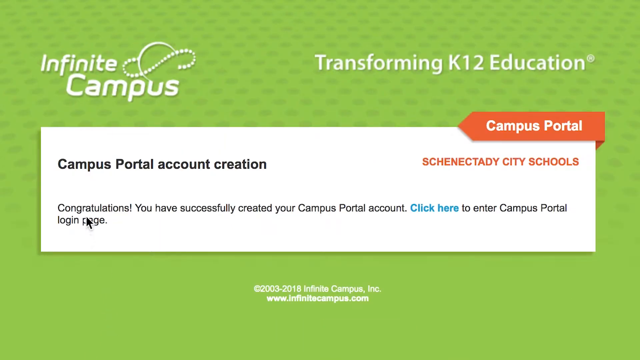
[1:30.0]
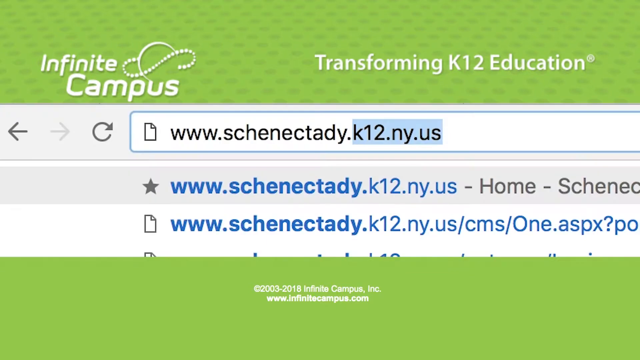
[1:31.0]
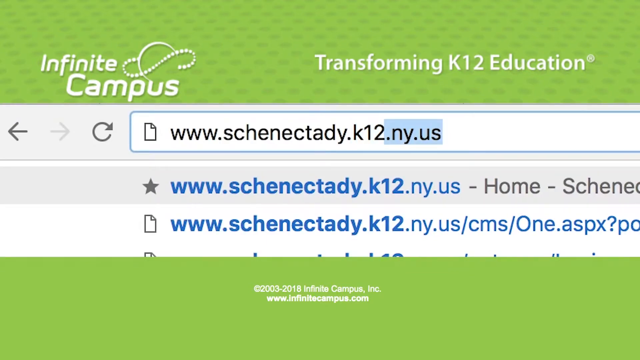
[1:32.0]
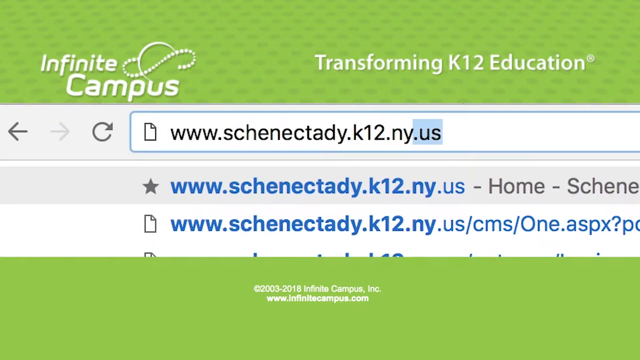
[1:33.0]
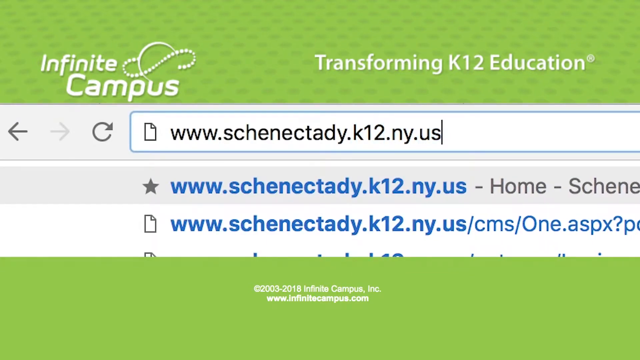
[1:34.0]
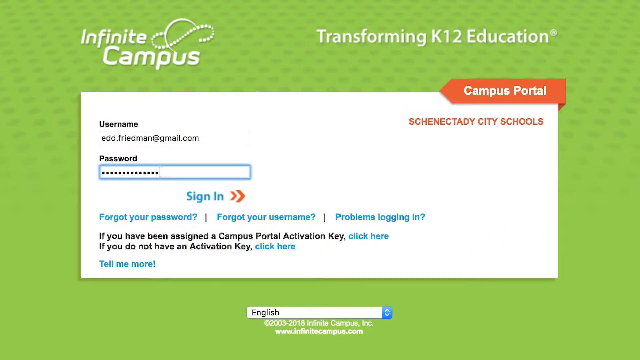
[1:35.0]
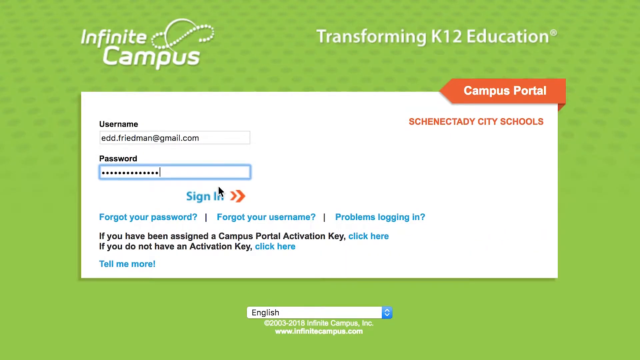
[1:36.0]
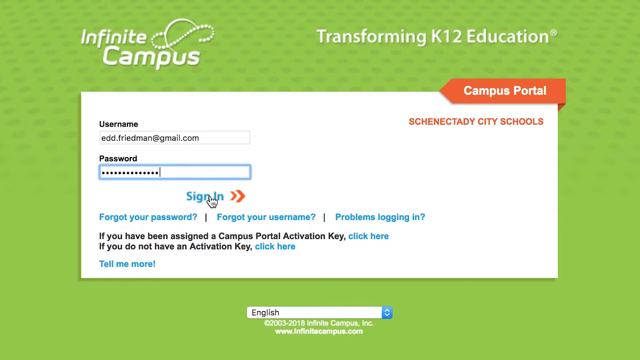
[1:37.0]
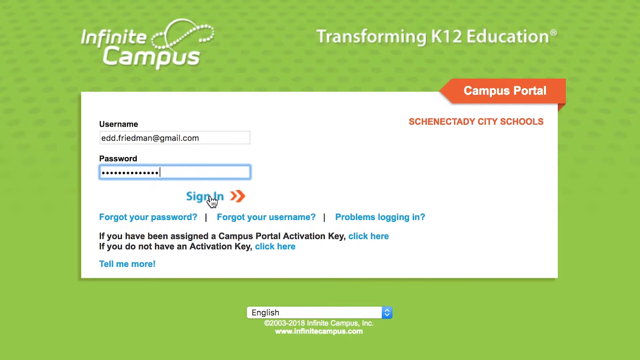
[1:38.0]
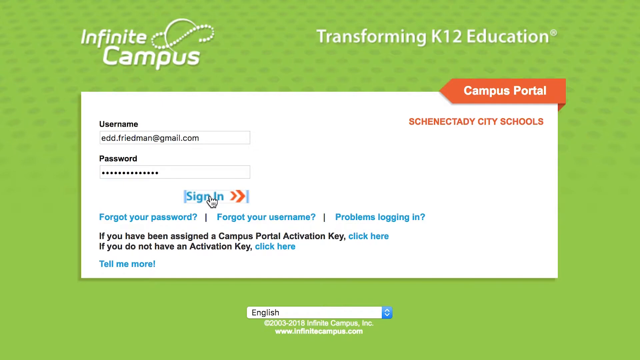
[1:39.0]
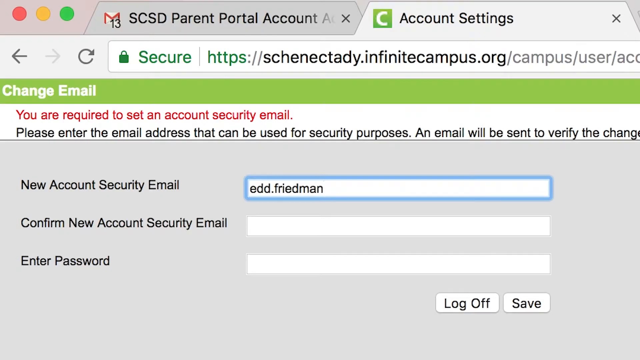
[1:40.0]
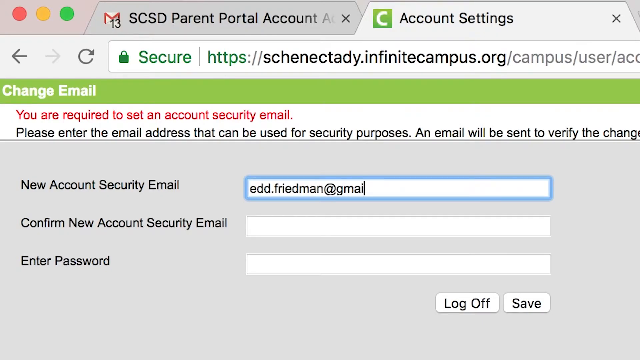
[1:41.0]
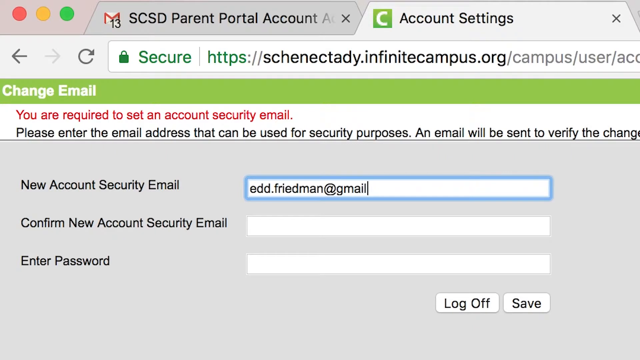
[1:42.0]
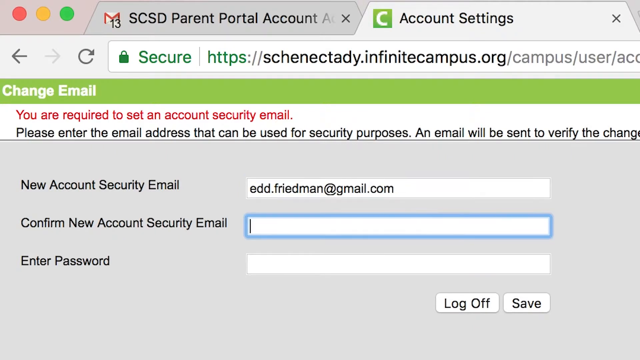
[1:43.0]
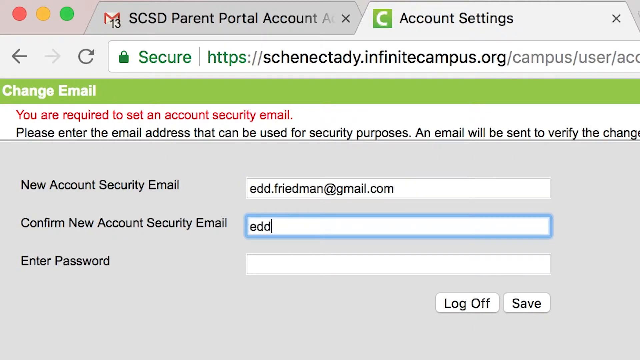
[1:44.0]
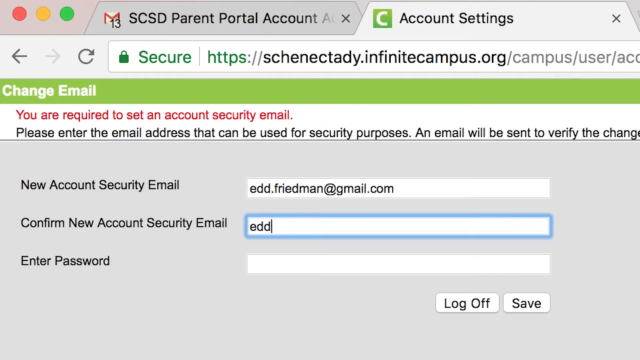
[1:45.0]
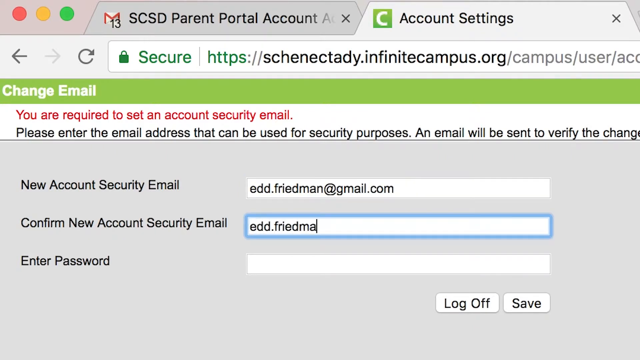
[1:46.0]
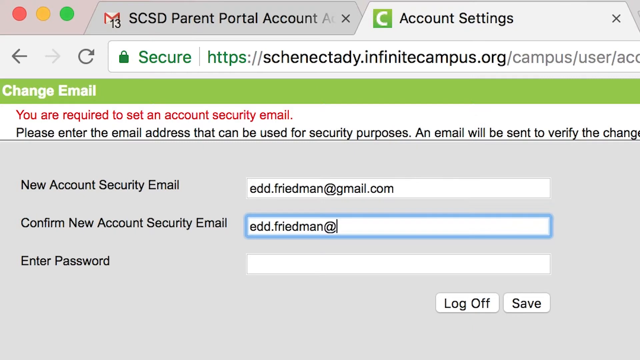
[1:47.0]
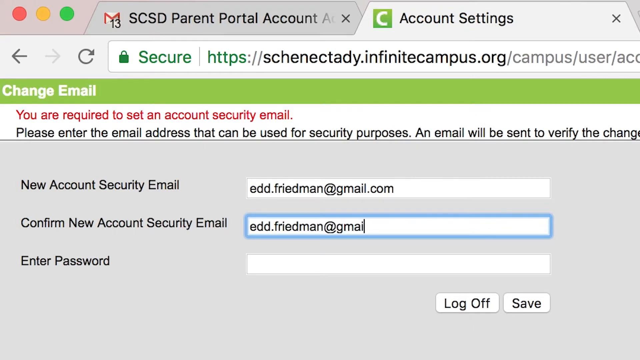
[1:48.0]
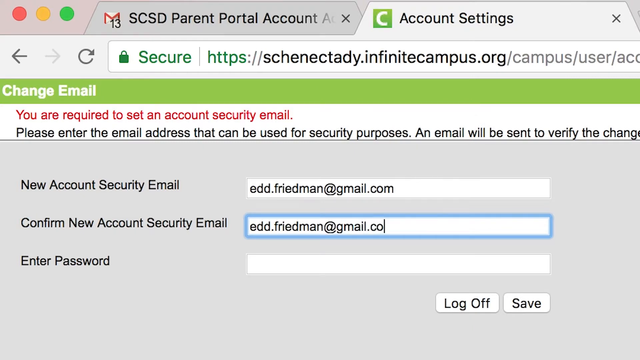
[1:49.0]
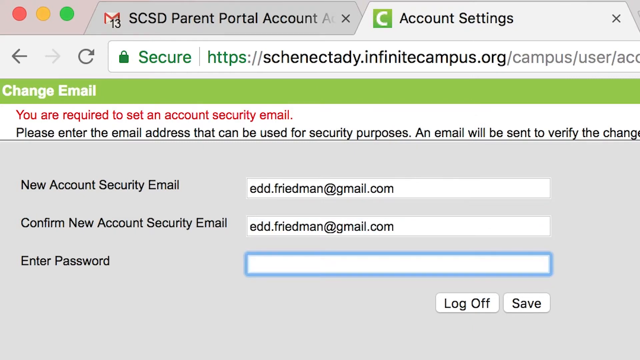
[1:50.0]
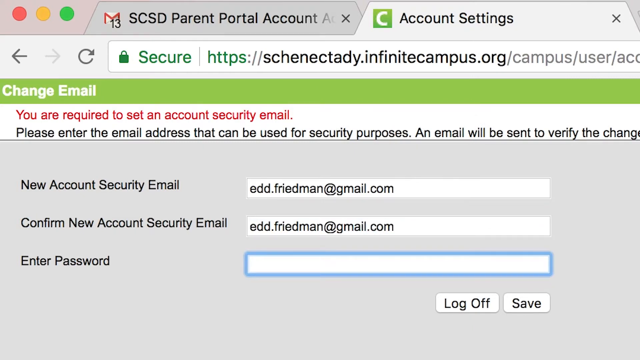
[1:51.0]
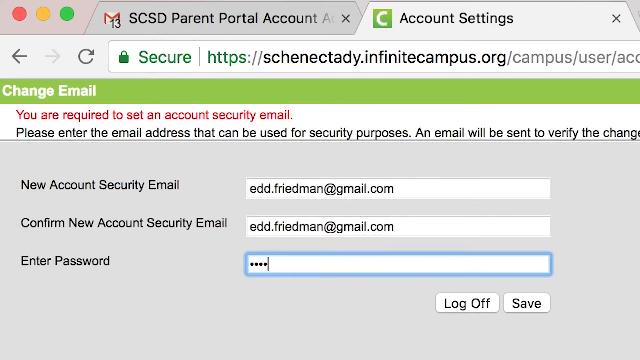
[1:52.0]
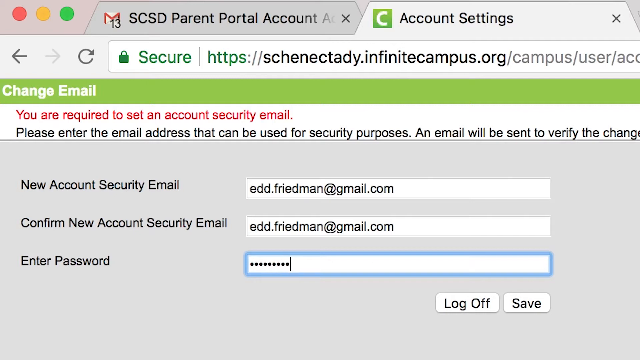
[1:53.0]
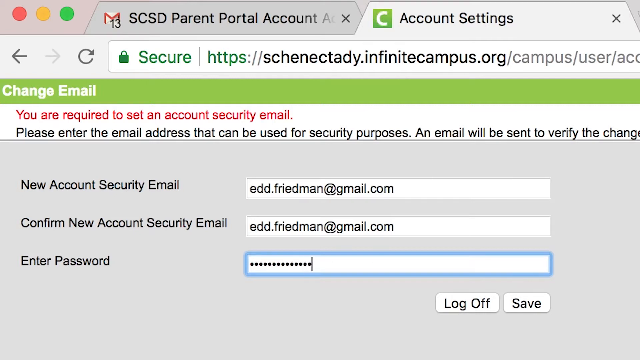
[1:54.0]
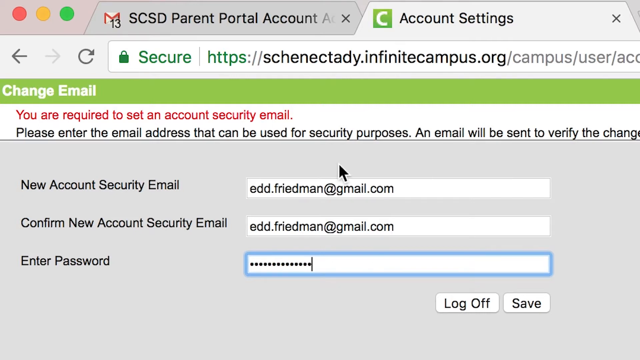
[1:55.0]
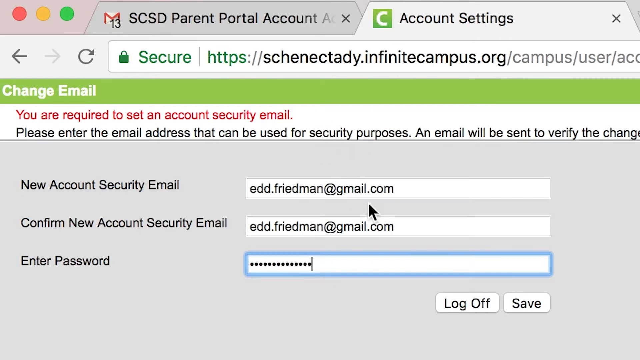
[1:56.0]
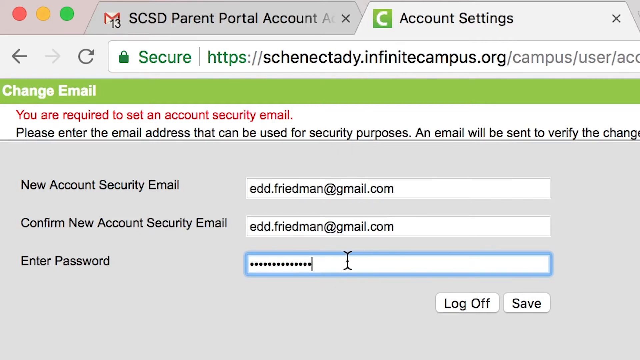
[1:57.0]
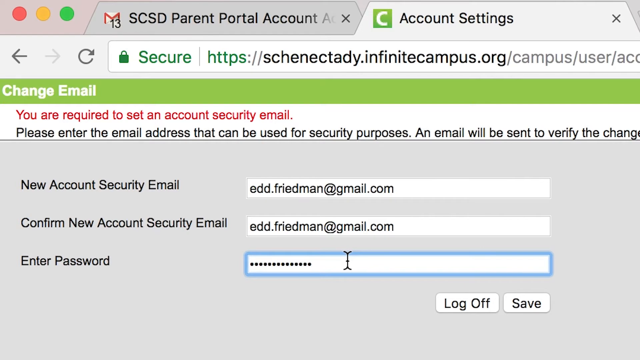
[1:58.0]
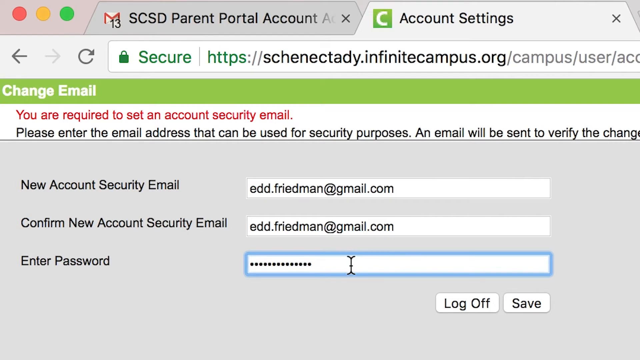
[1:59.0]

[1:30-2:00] A screen with a green background says "Infinite Campus" at the top left and "Transforming K-12 Education" at the top right. A white rectangle is in the center of the screen, with black lettering on its left side reading "Campus Portal Account Creation," and below that "Congratulations, you have successfully created a Campus Portal Account." To the right of that are blue letters, and to the right of those, in black, it says "to enter Campus Portal, log in." The mouse pointer is on the word "page." At the top right of the rectangle it says "Campus Portal" on a red background, with "SCHENECTADY City Schools" in red below. At the bottom of the screen is a small trademark symbol, with "2003 to 2018, Infinite Campus Inc." to its right and "www.infinitecampus.com" below. The mouse pointer goes over the word "you," and a zoomed-in version of the screen appears. At the top, "www.schenectady.k12.ny.us" is typed into the search bar, and links show up below it. It goes to a login page with login information. It then goes to a page for creating an account that says "new account security email," where a Gmail address is typed in. Below, at "confirm account security email," the Gmail address is retyped, and at "enter password" the password is typed. The mouse pointer circles "new account security email."